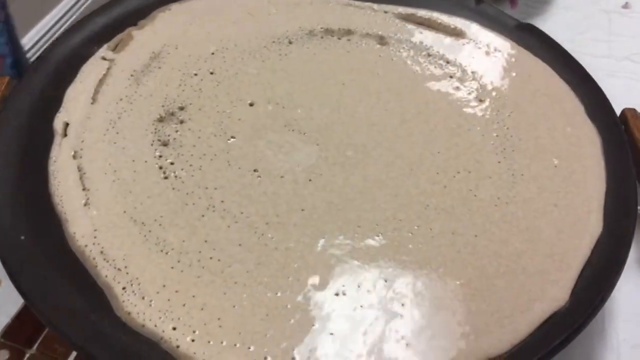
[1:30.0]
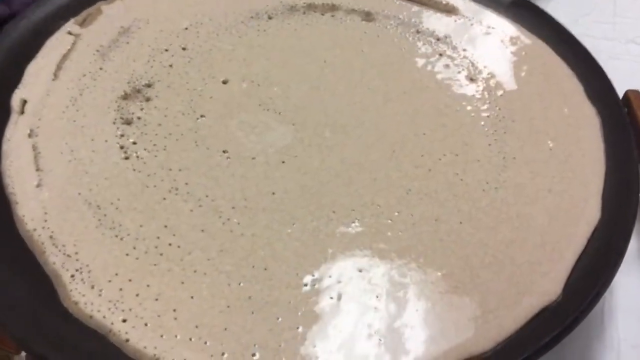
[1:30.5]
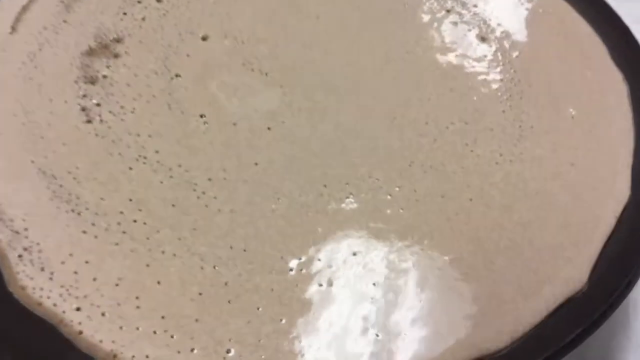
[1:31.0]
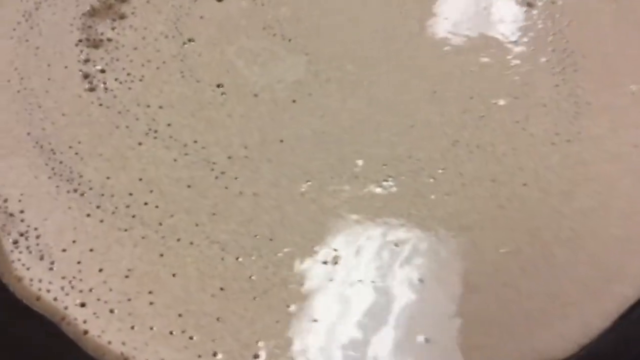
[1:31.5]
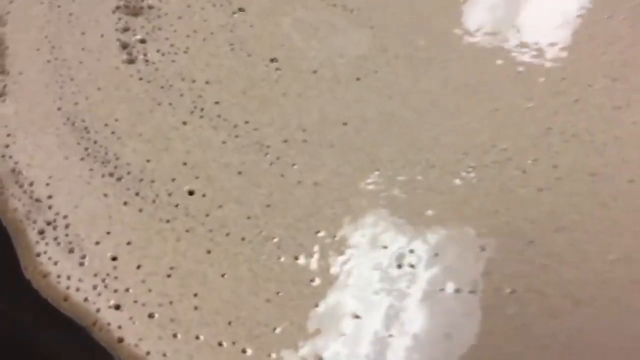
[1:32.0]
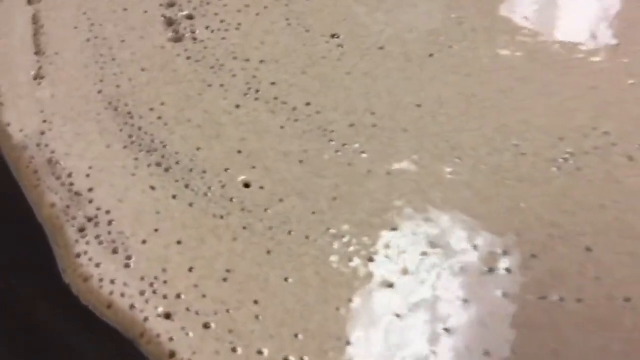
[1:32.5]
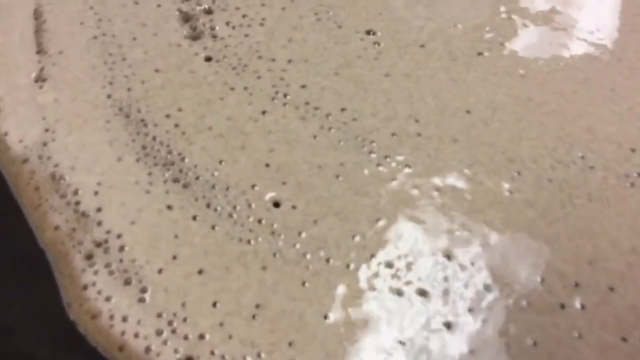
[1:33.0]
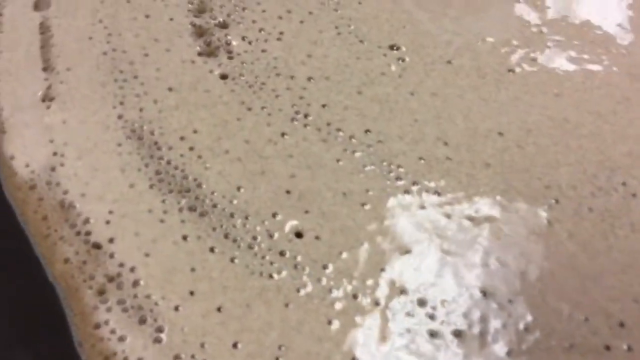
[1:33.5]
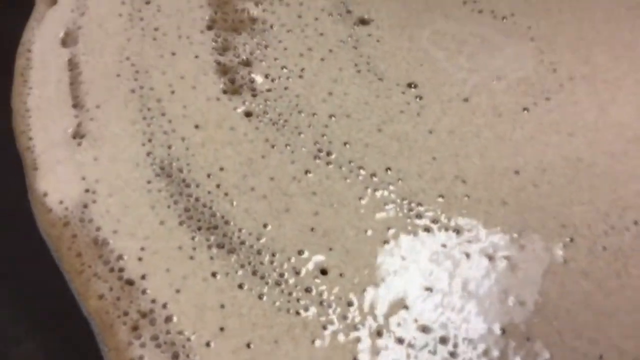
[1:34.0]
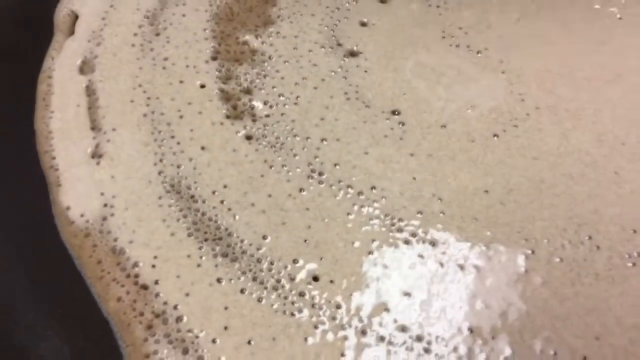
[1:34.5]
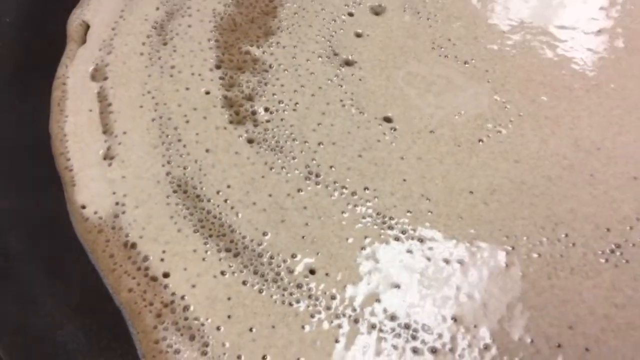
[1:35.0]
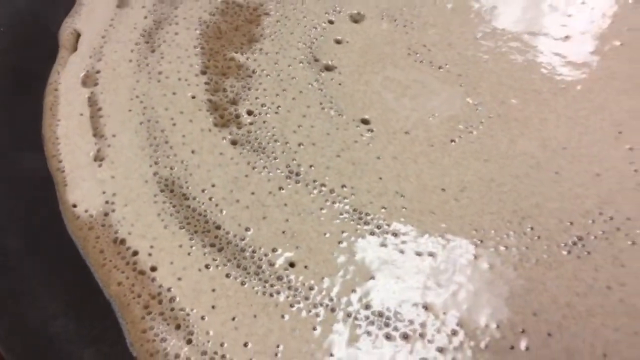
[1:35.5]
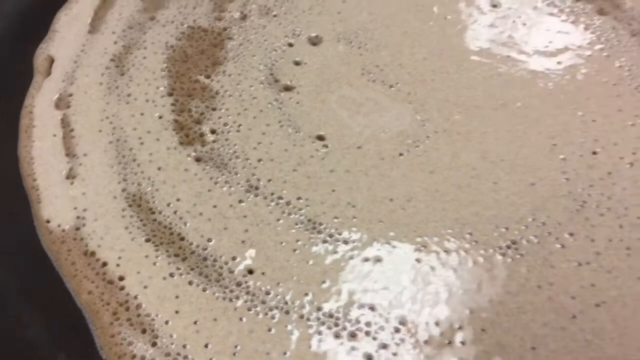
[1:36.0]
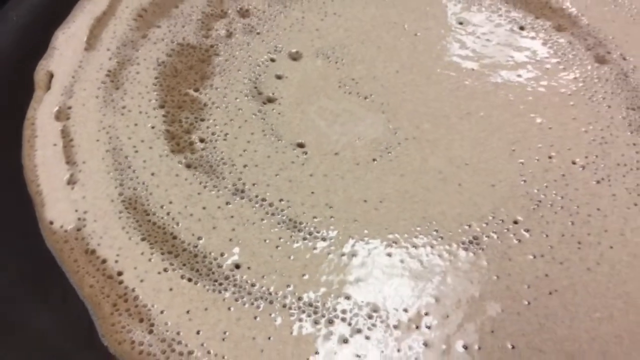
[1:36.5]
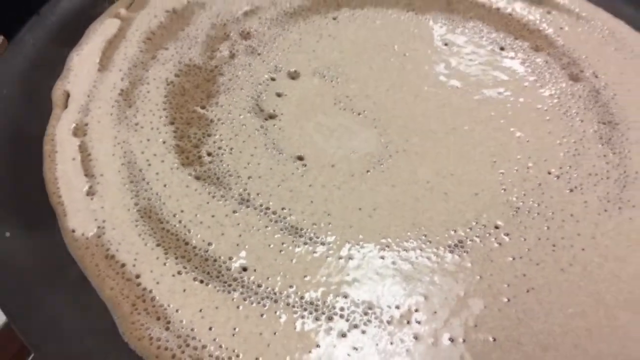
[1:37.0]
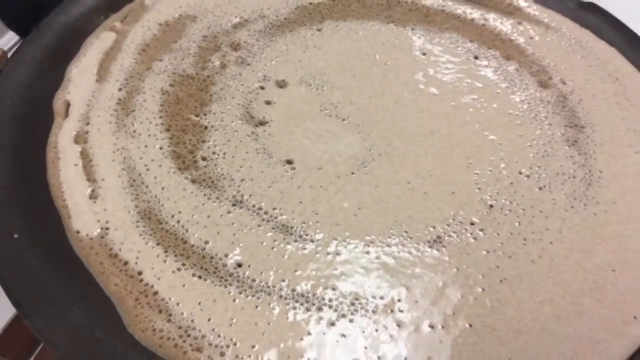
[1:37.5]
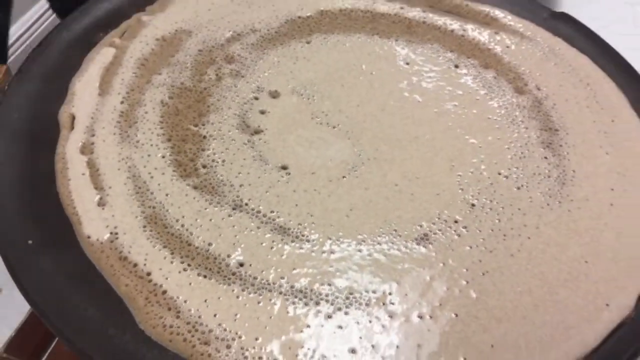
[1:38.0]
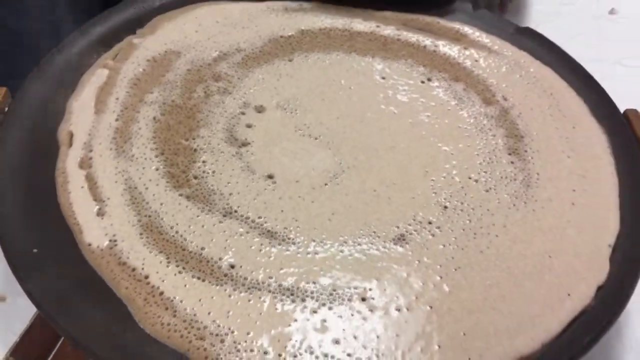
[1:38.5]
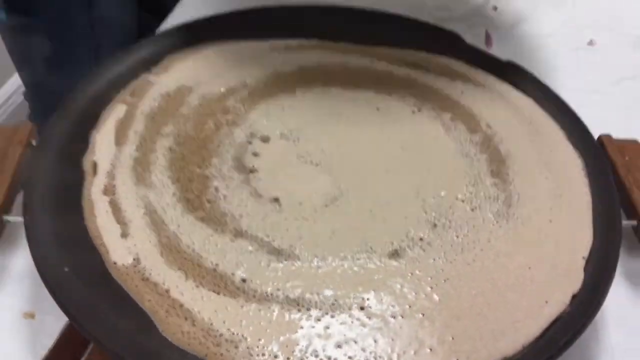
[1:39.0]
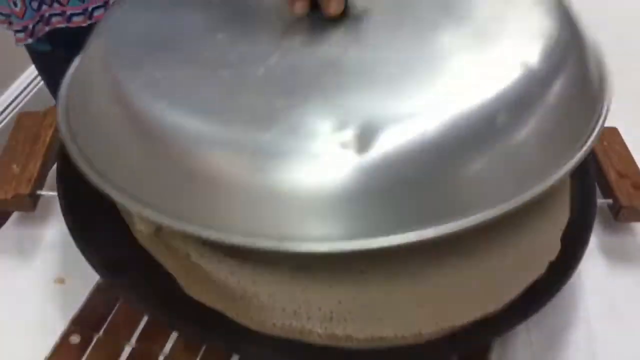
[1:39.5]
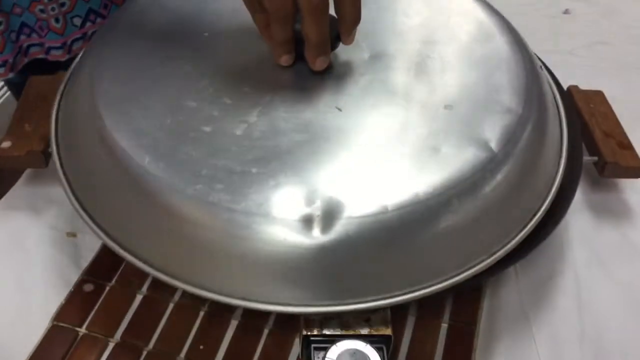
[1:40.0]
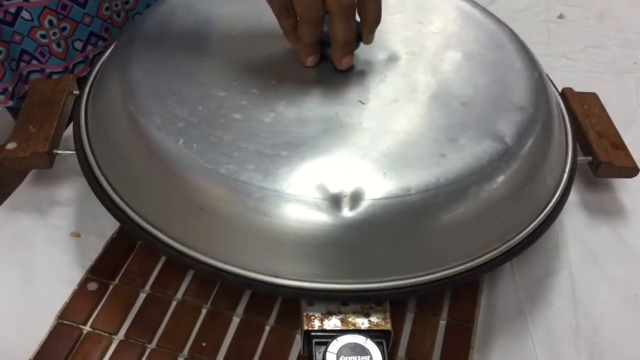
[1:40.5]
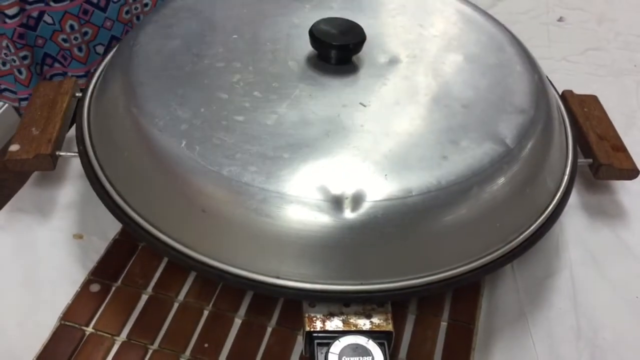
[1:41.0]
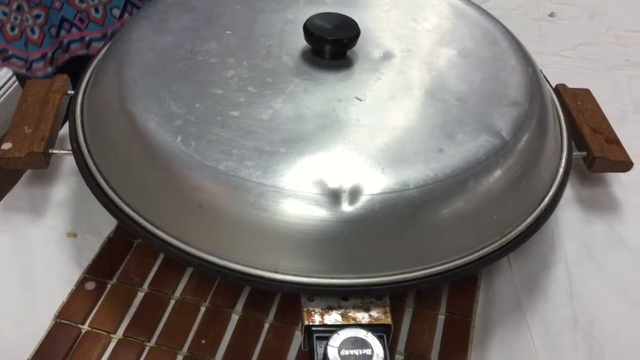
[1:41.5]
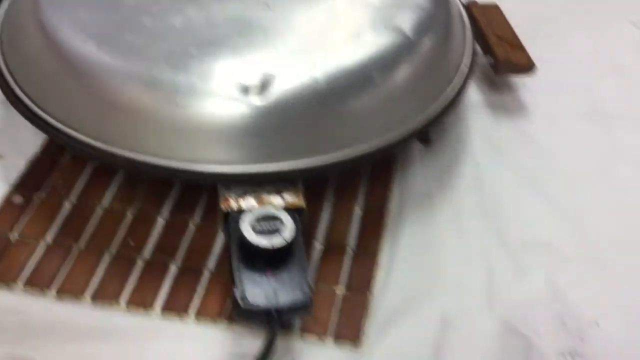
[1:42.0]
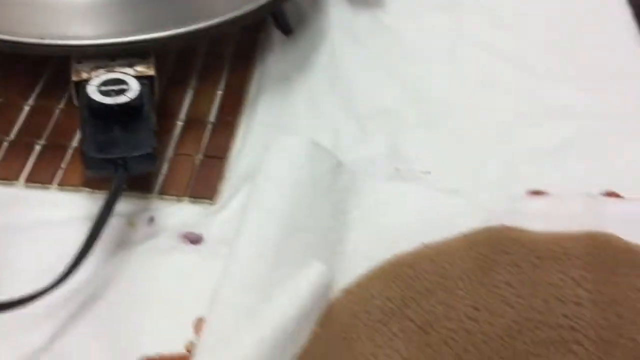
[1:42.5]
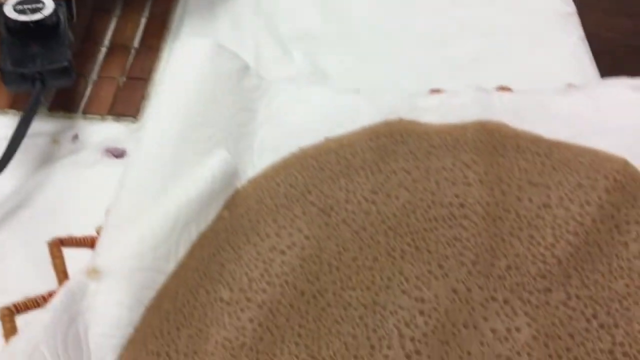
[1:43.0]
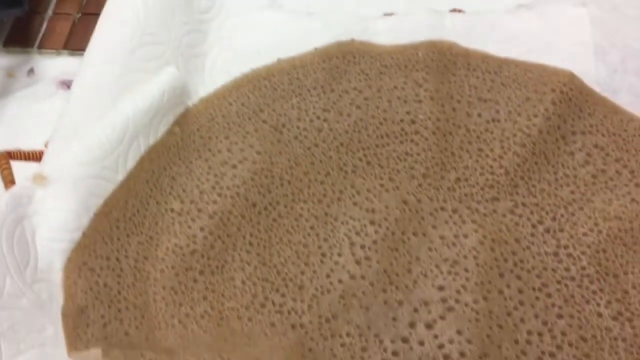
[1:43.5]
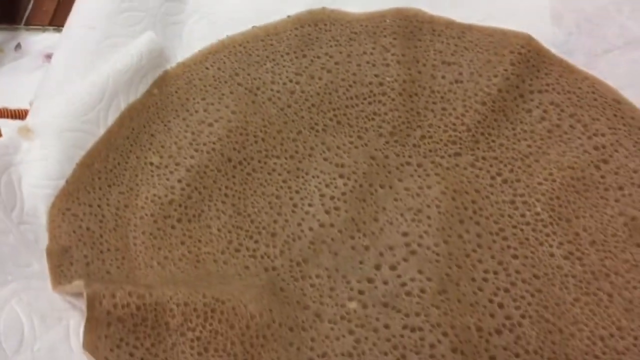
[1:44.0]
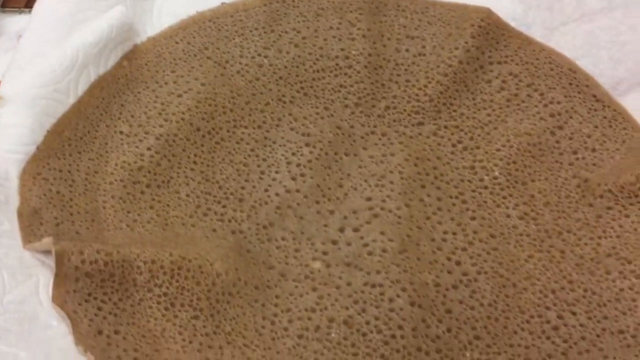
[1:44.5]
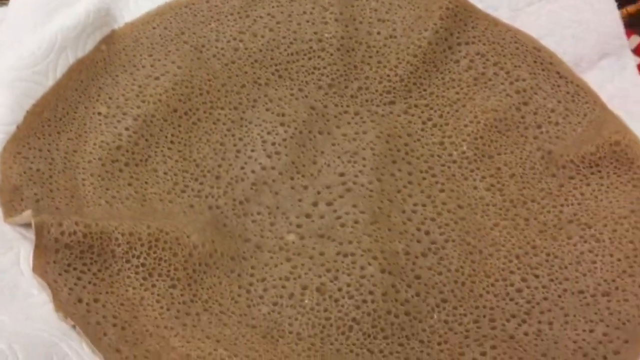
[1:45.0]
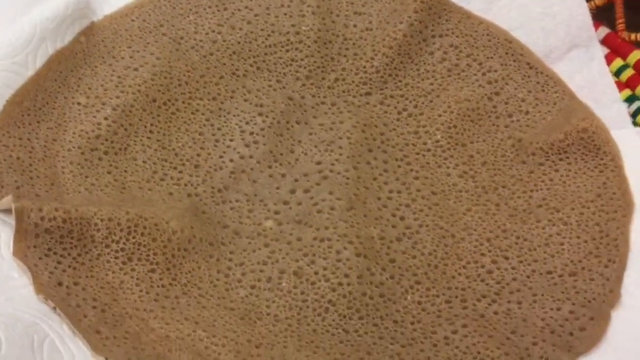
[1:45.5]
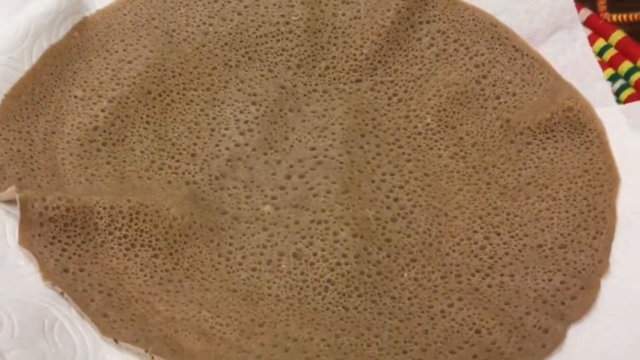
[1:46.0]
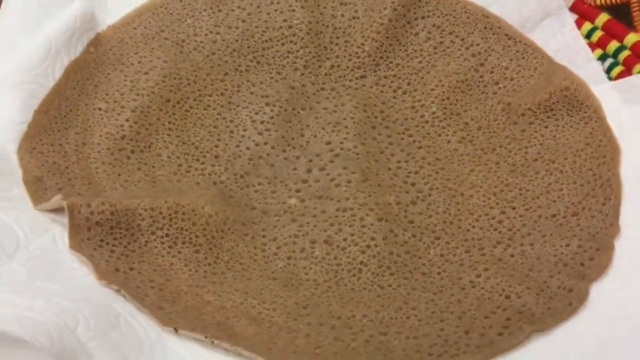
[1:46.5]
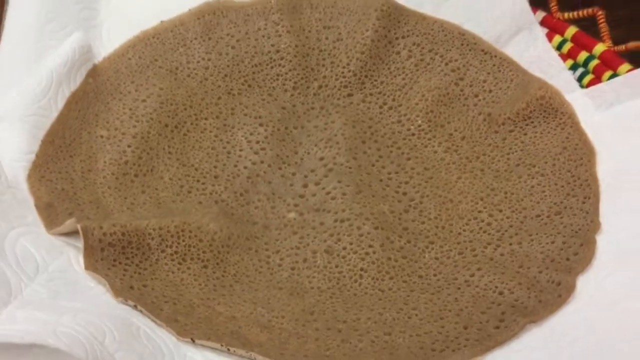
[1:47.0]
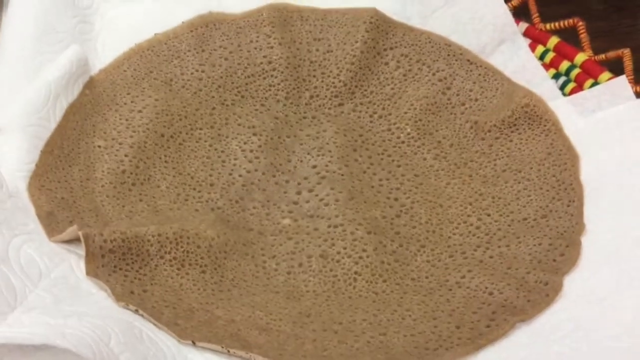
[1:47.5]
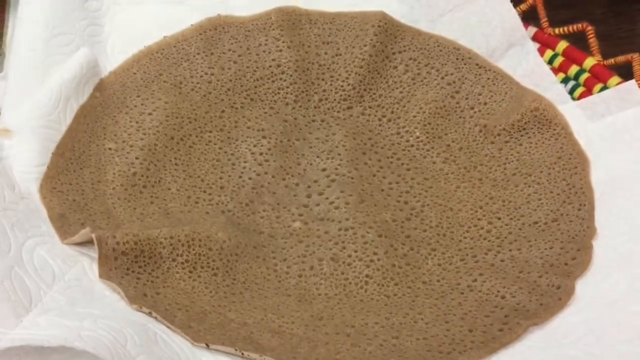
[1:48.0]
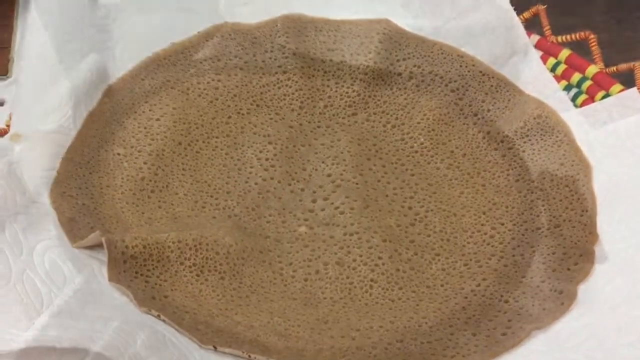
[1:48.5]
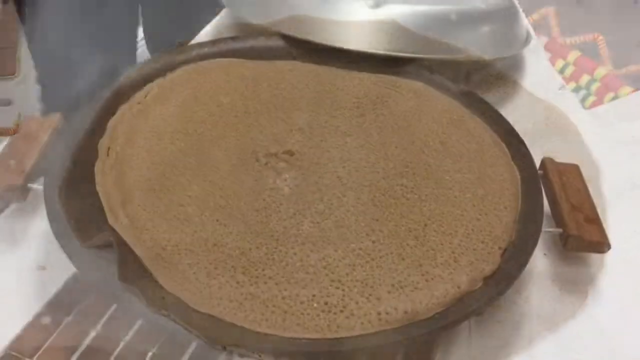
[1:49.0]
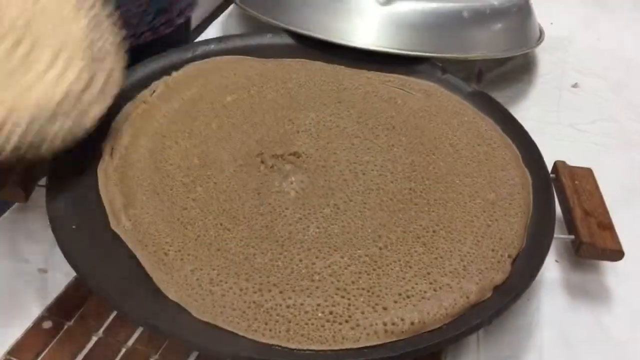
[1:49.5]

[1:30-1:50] The camera zooms in on the flour mixture on the hot plate, where two strip lights are reflected on the mixture. It zooms in on one of the left-hand corners, showing lots of tiny air bubbles that have appeared during cooking. The camera zooms out slightly, and heat and steam rise off the left-hand edge of the material. The woman uses her left hand to place a metal lid, holding it by the handle in the middle, on top of the hot plate. The camera then pans down to an already completed one made earlier: a large circular shape with lots of holes, resting on top of lots of pieces of paper towel.